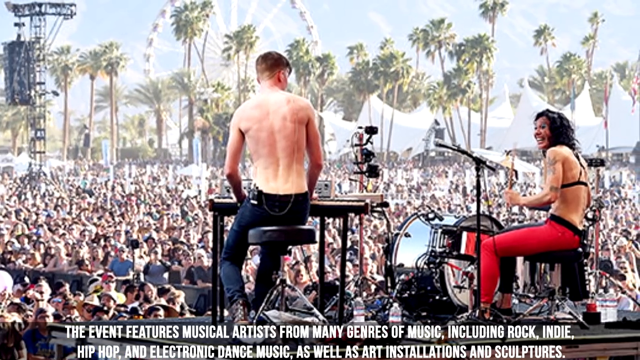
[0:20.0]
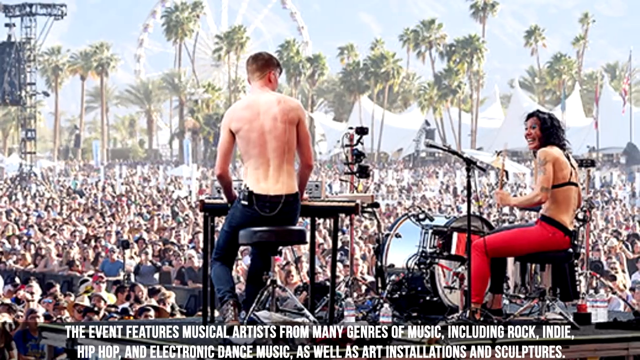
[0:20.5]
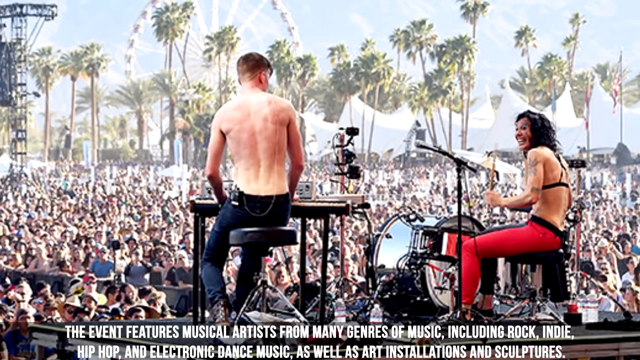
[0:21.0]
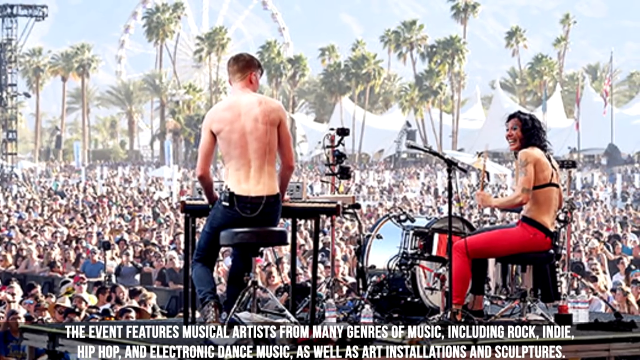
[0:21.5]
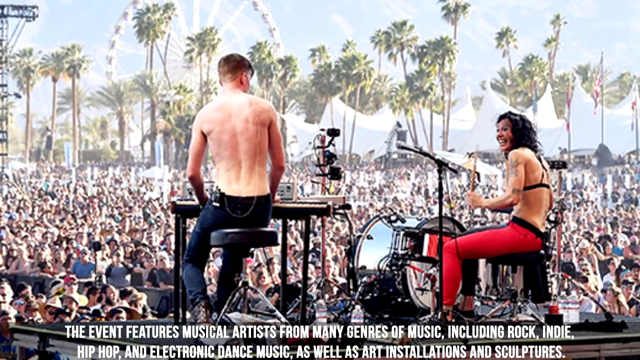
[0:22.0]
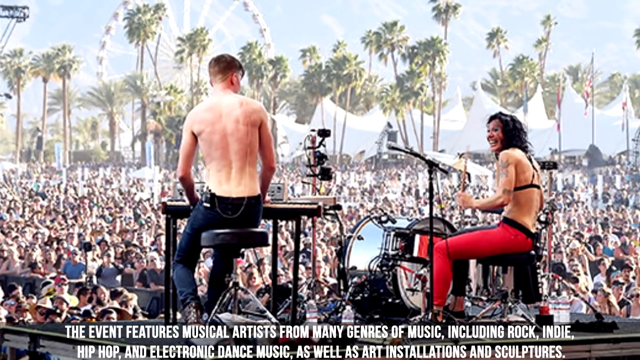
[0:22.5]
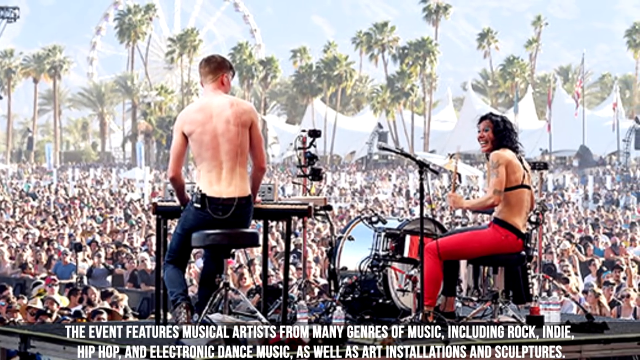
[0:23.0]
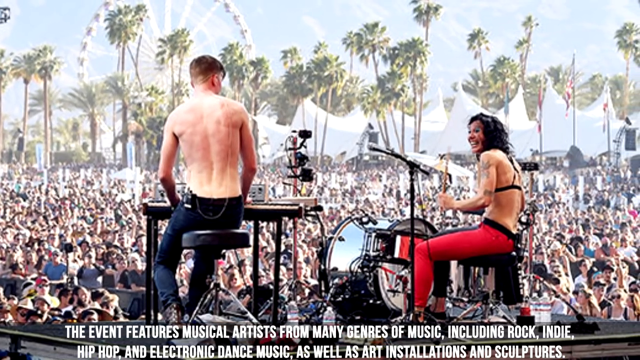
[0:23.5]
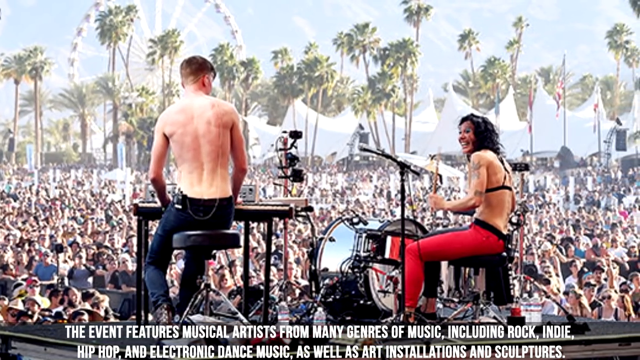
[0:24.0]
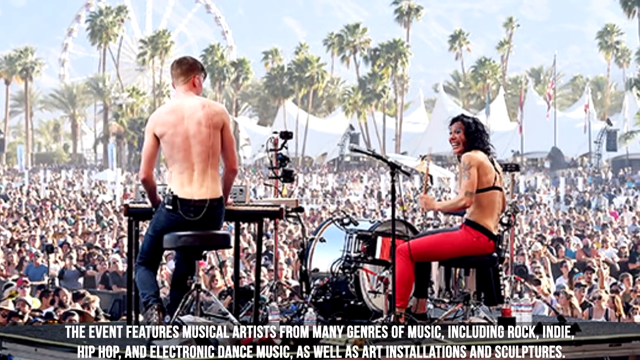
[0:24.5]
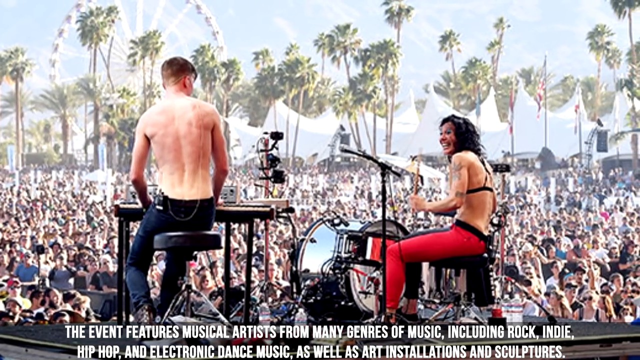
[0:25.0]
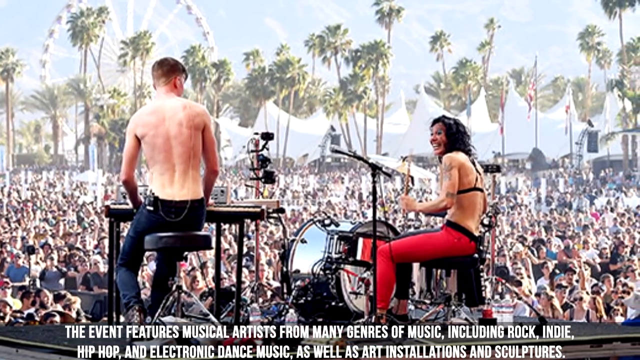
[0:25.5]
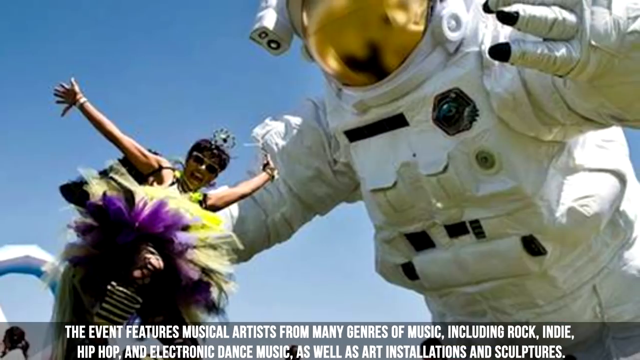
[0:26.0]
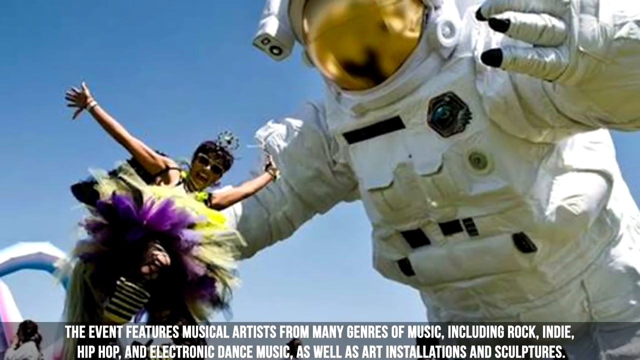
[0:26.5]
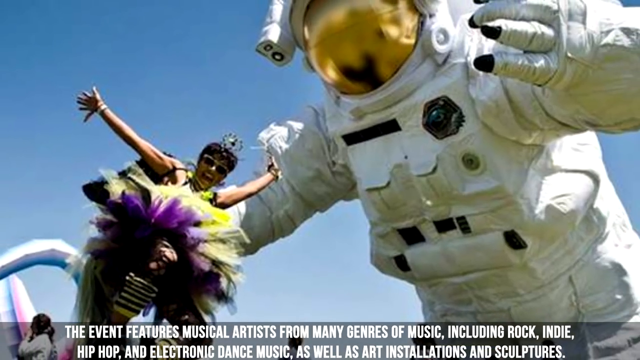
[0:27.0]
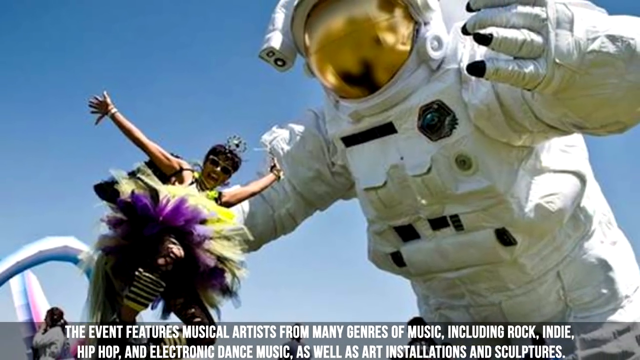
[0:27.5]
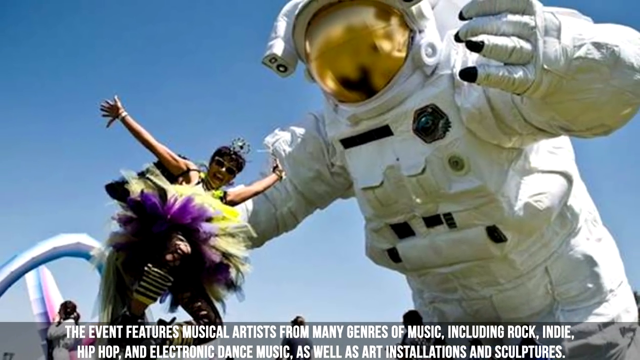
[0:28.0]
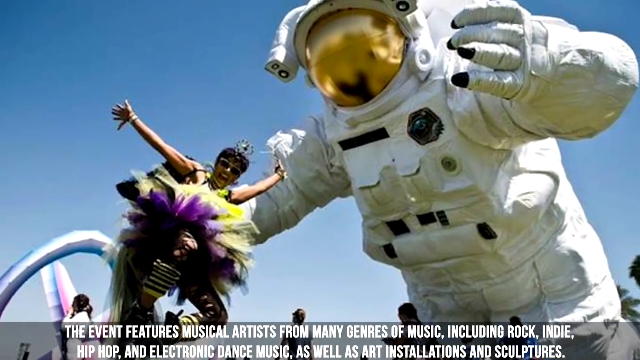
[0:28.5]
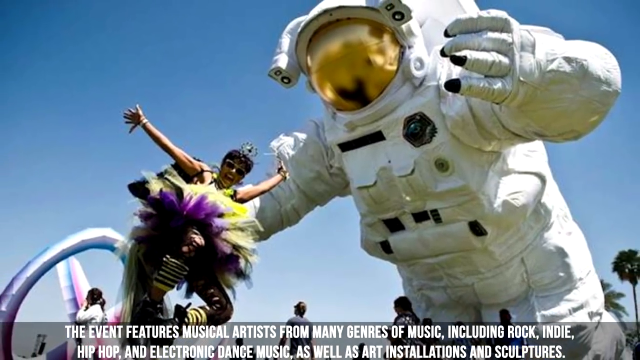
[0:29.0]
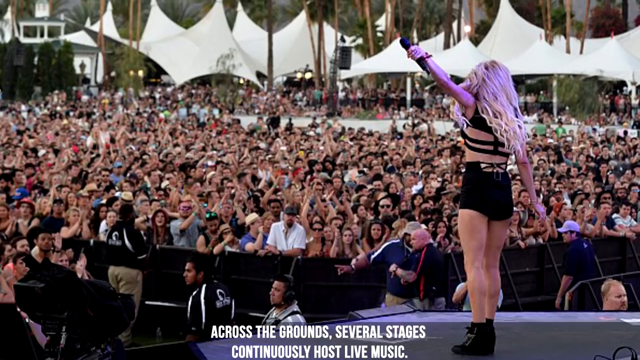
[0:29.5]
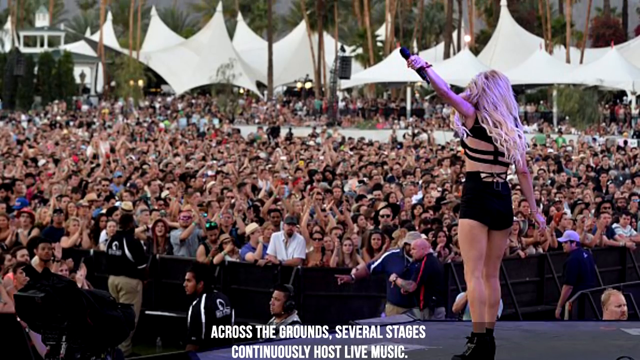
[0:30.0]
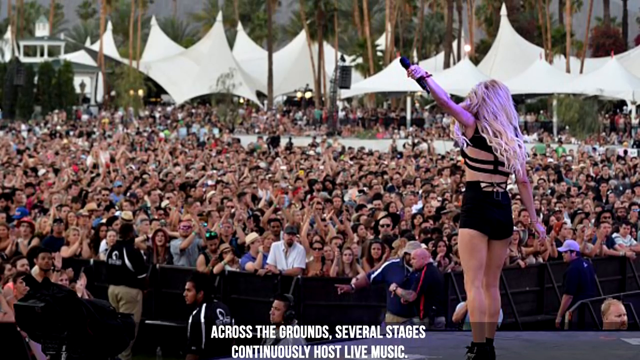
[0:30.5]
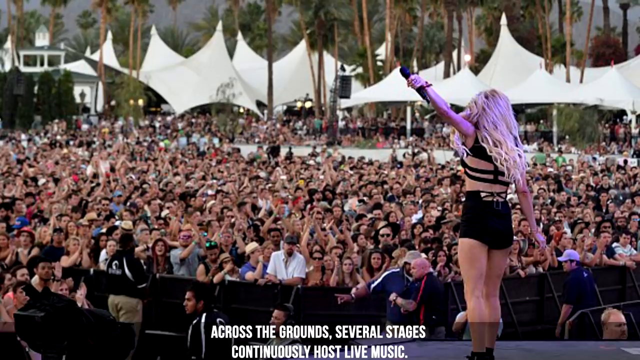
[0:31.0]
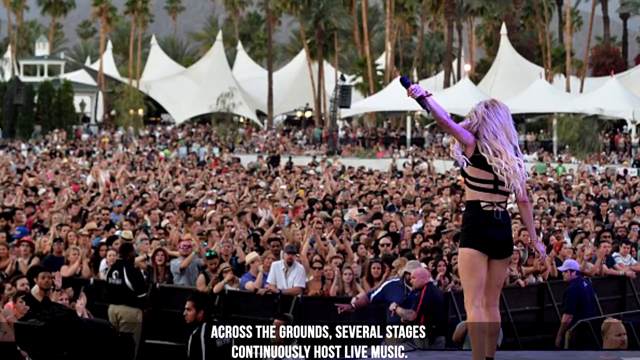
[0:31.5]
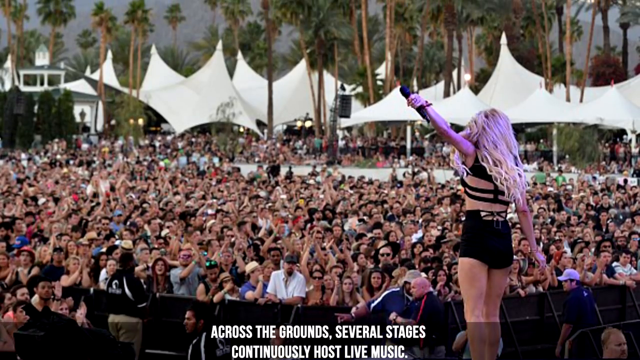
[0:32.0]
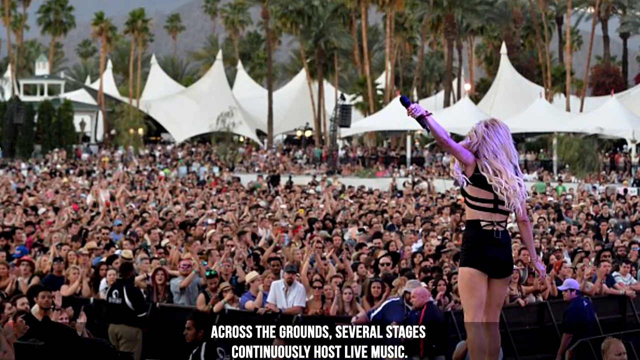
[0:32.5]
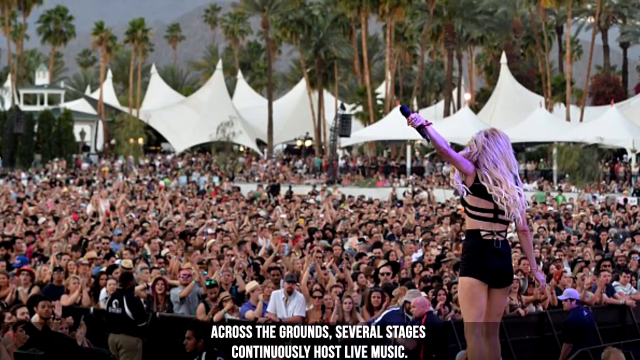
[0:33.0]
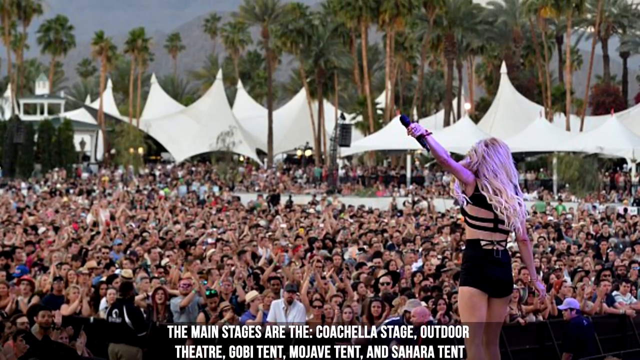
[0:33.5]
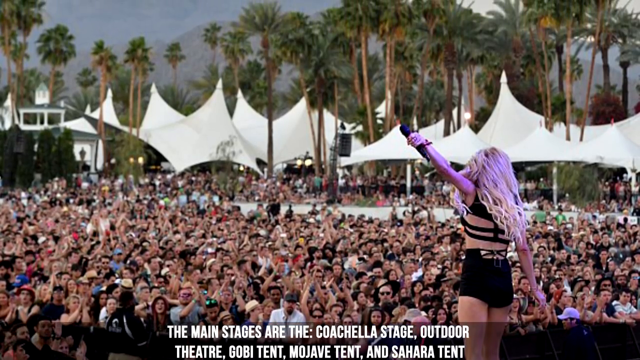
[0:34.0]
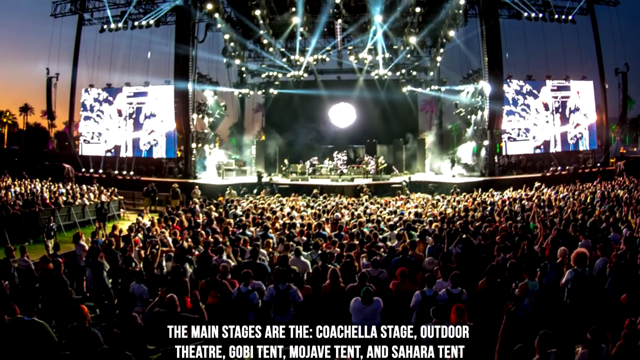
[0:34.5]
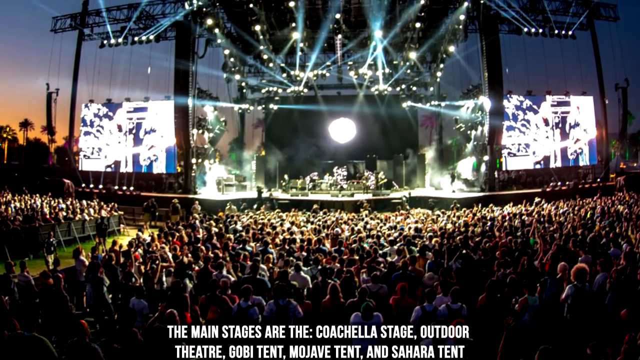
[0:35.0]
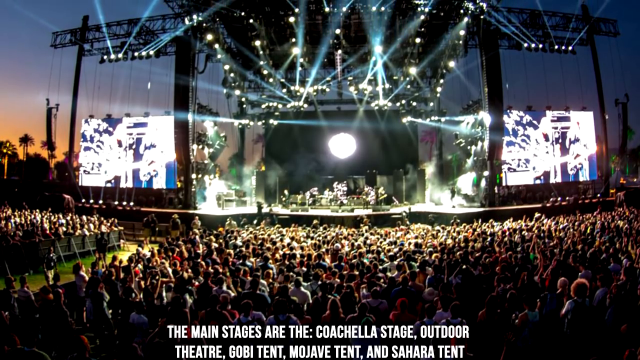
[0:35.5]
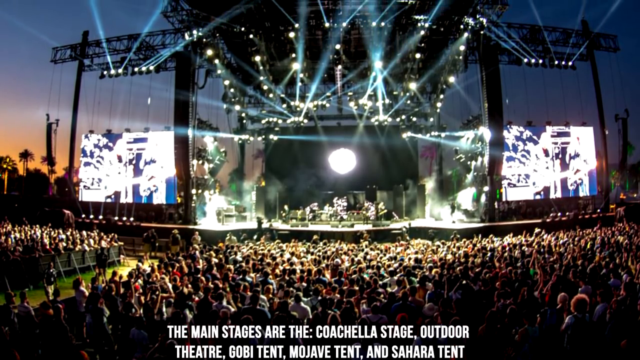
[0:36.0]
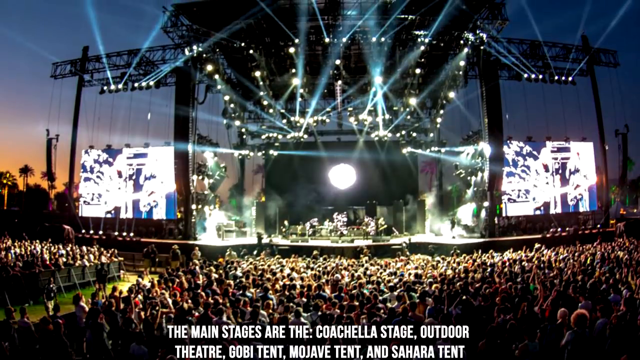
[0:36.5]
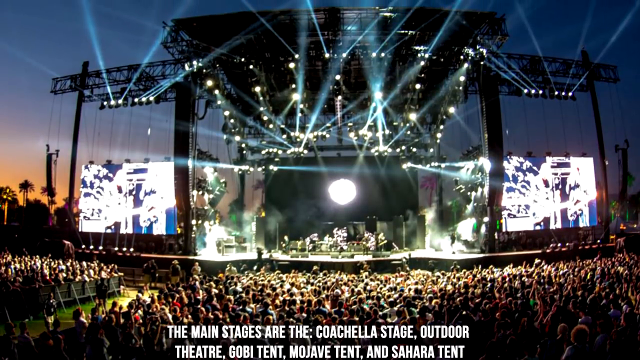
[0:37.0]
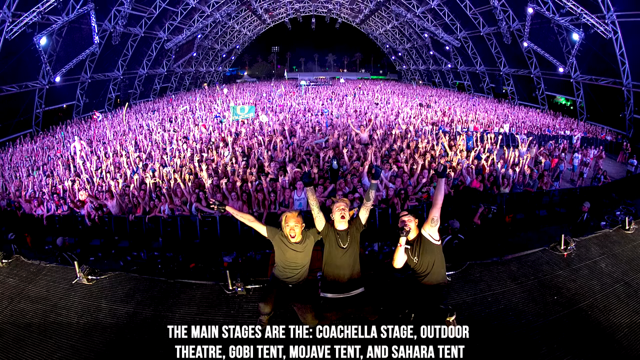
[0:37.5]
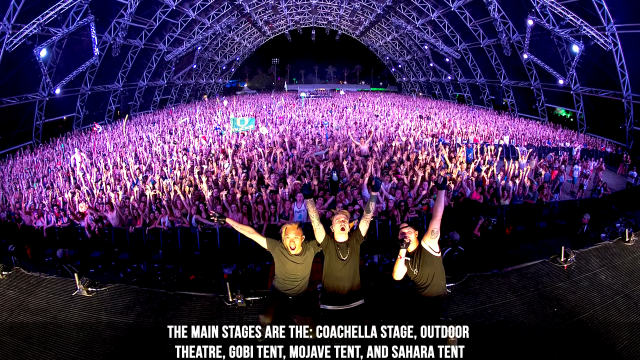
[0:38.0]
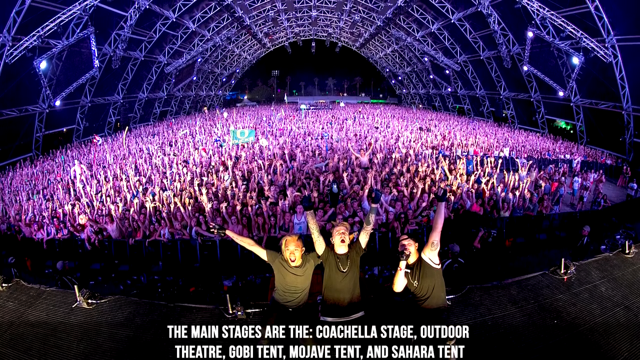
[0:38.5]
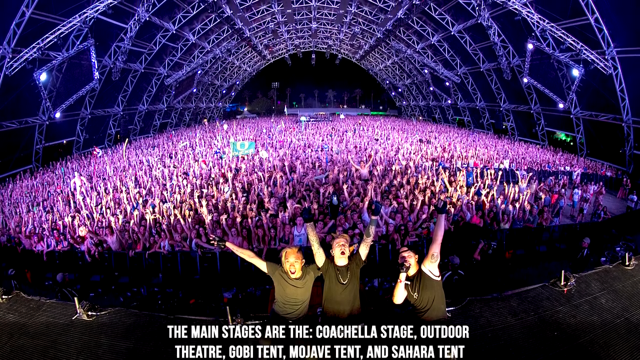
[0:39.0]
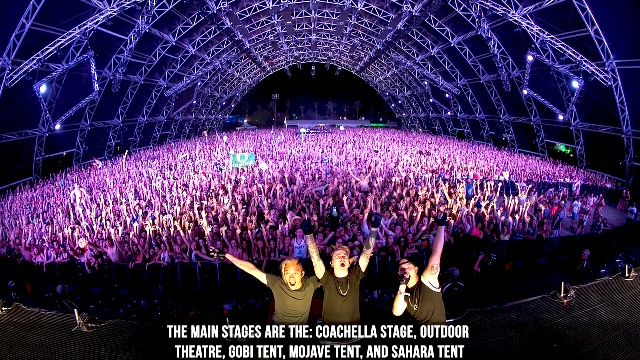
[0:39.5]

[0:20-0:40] The camera pans from left to right across a still image while white, all-capitalised text at the bottom reads "the event features musical artists from many genres of music including rock indie". The photograph shows what looks like two individuals on a stage. On the left, a shirtless man in blue jeans sits on a stool with his back to the viewer, both arms slightly out in front of him and elbows bent, his hands apparently on a keyboard, though his hands are not visible. To his right is a woman with black hair, in red trousers and a black bra, sitting behind what looks like drums; her left arm is by her side, bent at the elbow with the forearm straight out in front, and she appears to hold a drumstick in her left hand. In front of them is a massive crowd, a mass of people without individual detail, and in the far background are lots of trees and a big ferris wheel. The next image, with the same text at the bottom, shows a giant astronaut in a white spacesuit and white helmet with yellowish glass. Its arm looks like it is wrapped around a person held in its hand; only the person's shoulders, head and two arms stretched out wide are visible, and the person wears black sunglasses. Purple and white feathers surround the astronaut's hand. The spacesuit appears to be a giant prop, with the person posing for a photo. Another still image has text at the bottom reading "across the ground several stages". It is taken from behind a performer on stage: a woman with blonde hair in a black skirt and a black top that seems to be made up of lots of straps at the back. Her left arm is held straight up at a 45 degree angle to her side, a microphone in that hand with her fingers wrapped near its top; her right arm is straight by her right side, held slightly away from her body, fingers stretched out. A massive crowd is in front of her, with some white tents in the background. The camera moves up, and a cut leads to a still image from in or just above an audience, showing a massive stage at night with lots of lights beaming out from it and a dash of orange on the left side of the background where the sun appears to be setting. Text begins "the main stages". The camera moves up the image, revealing more lights. Then an image from on stage shows three men facing the camera with their backs to a massive audience, under a massive dome in an indoor arena. The man in the centre has both hands directly above him with fists clenched. The man on the left holds his arm out to his side, elevated above the shoulder, fist clenched. The man on the right holds a microphone to his mouth in his right hand, arm bent at the elbow, and his left arm is stretched straight up, slightly away from his head, fingers and thumb curled into a fist.